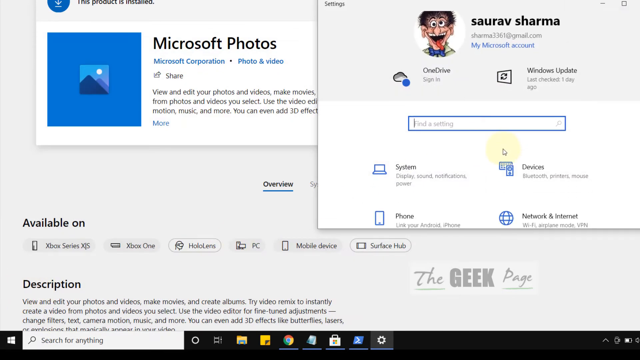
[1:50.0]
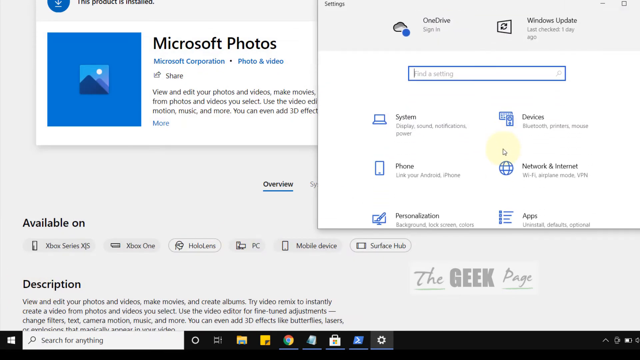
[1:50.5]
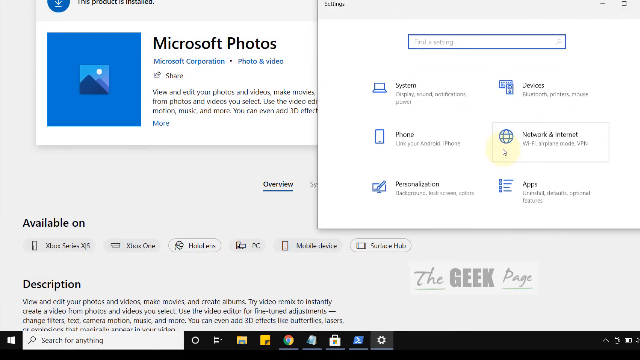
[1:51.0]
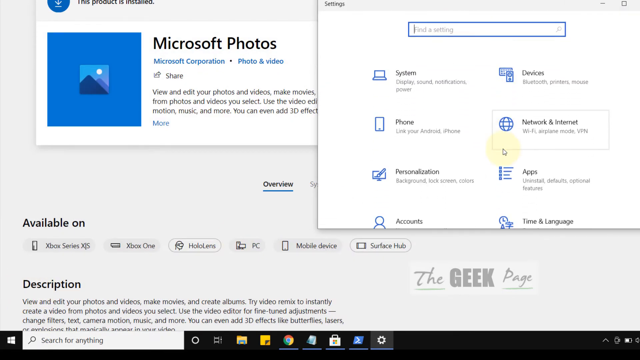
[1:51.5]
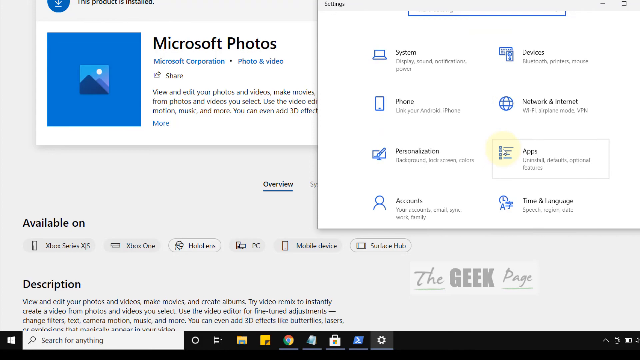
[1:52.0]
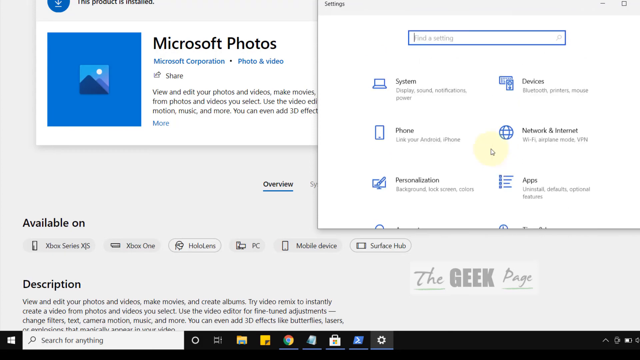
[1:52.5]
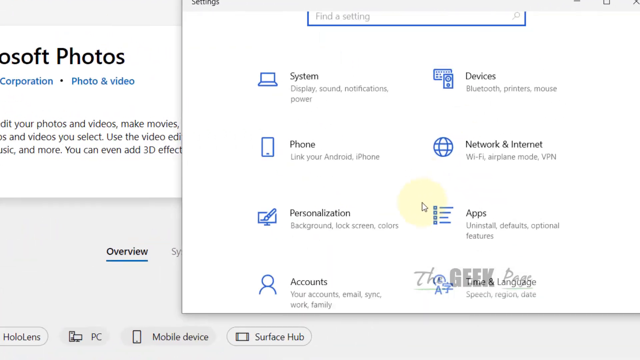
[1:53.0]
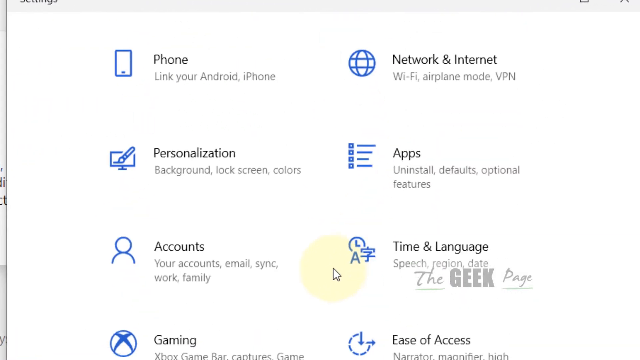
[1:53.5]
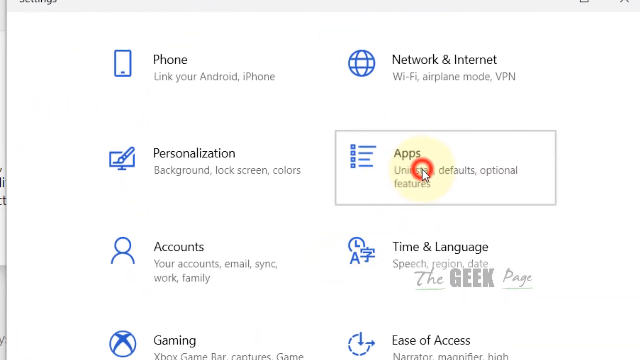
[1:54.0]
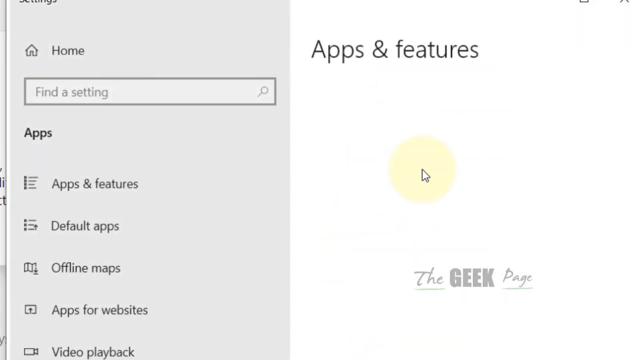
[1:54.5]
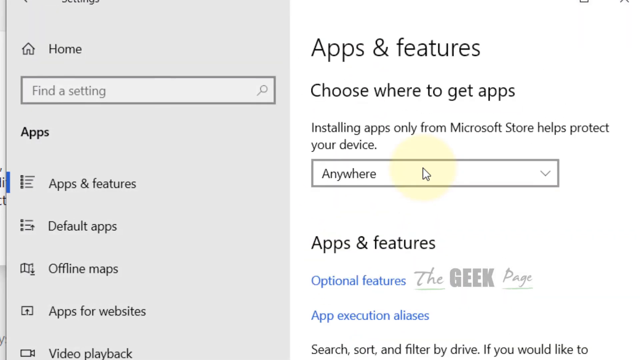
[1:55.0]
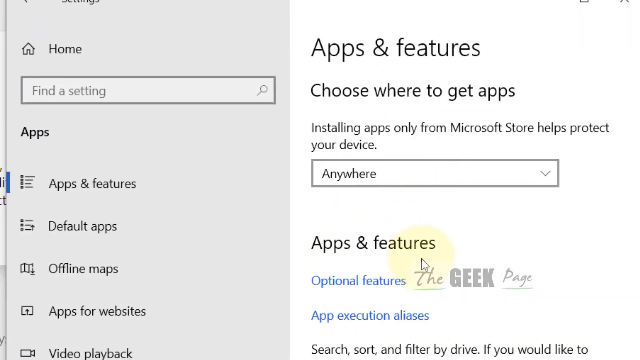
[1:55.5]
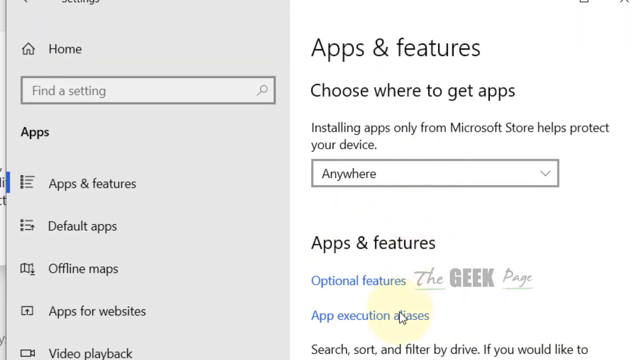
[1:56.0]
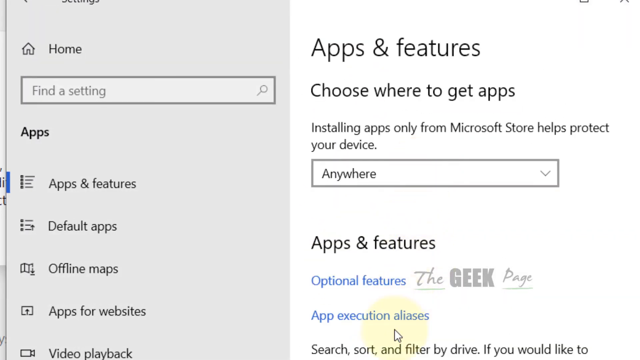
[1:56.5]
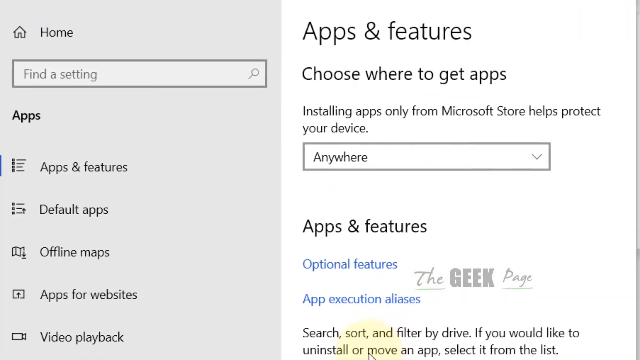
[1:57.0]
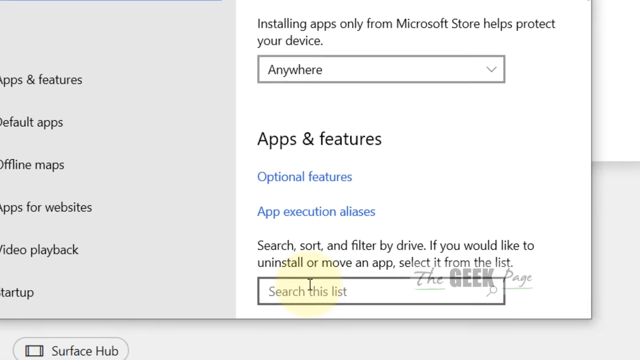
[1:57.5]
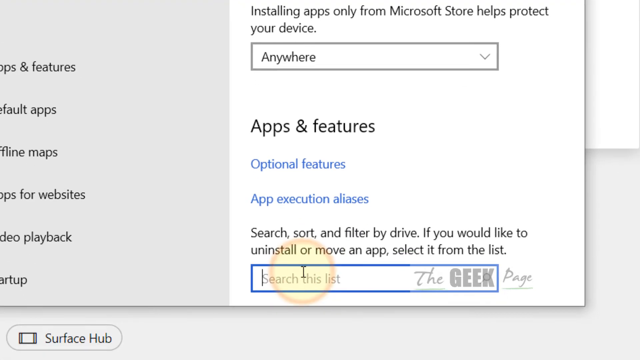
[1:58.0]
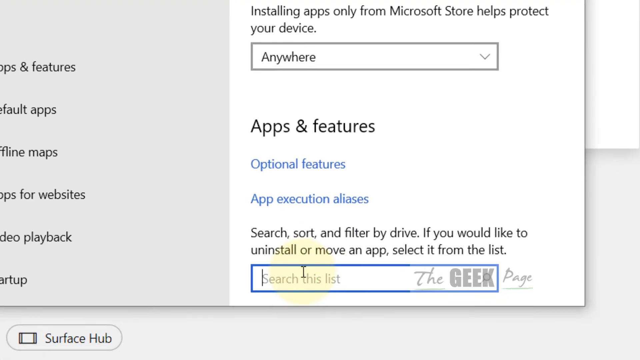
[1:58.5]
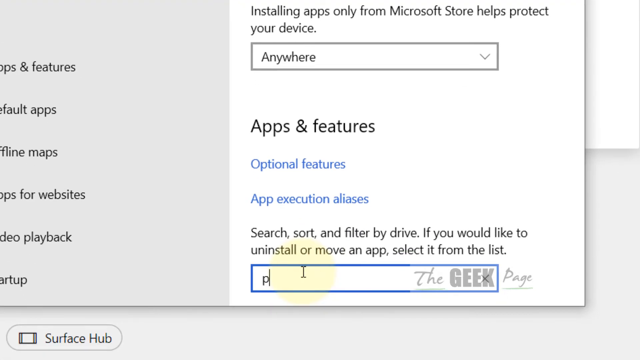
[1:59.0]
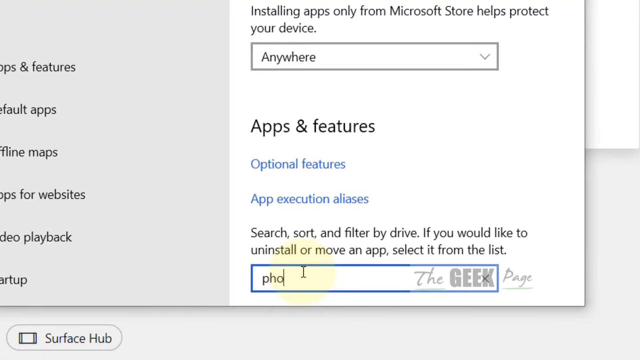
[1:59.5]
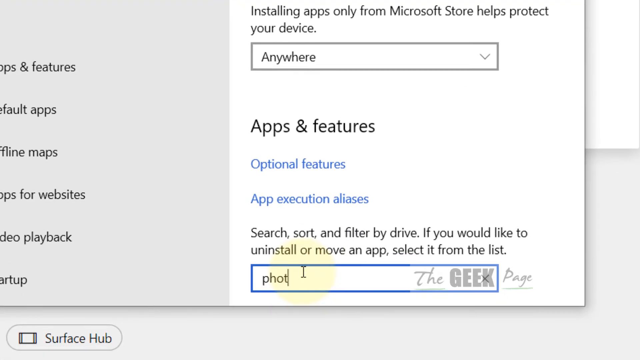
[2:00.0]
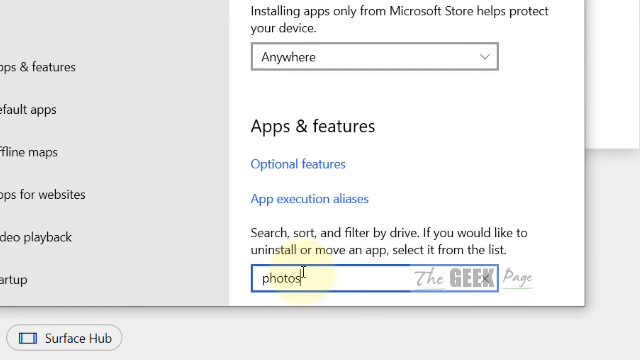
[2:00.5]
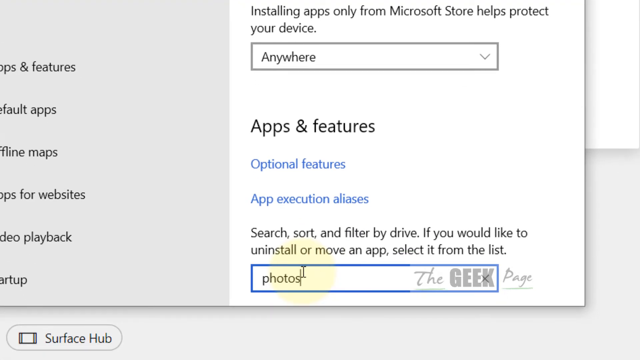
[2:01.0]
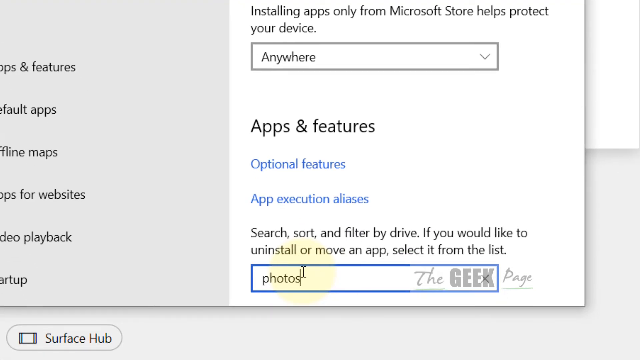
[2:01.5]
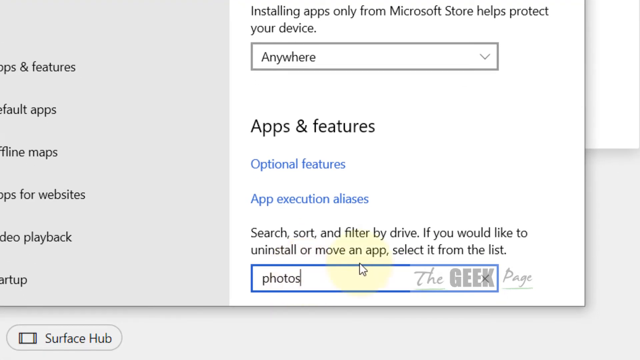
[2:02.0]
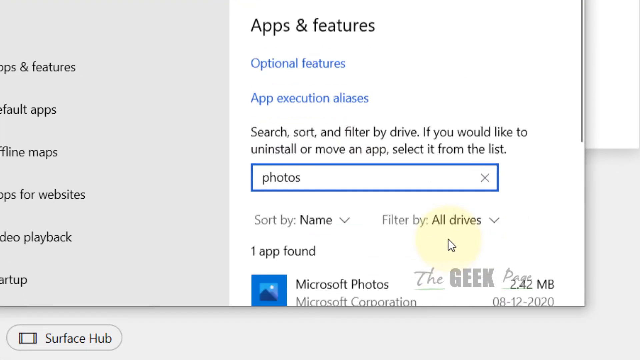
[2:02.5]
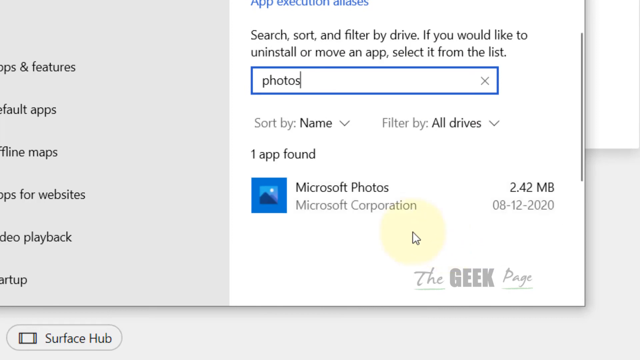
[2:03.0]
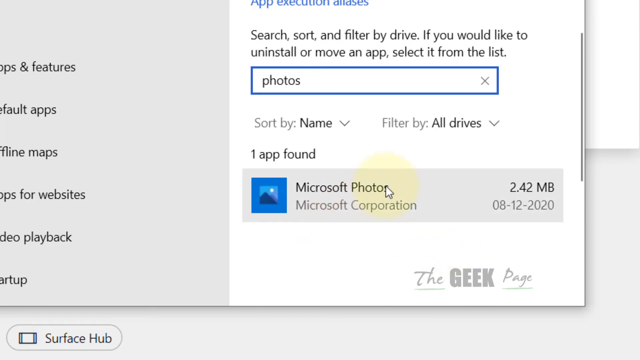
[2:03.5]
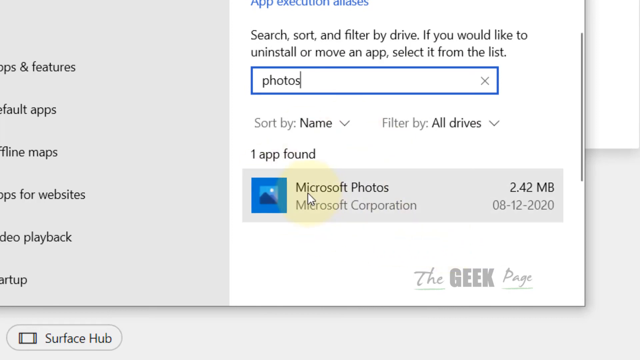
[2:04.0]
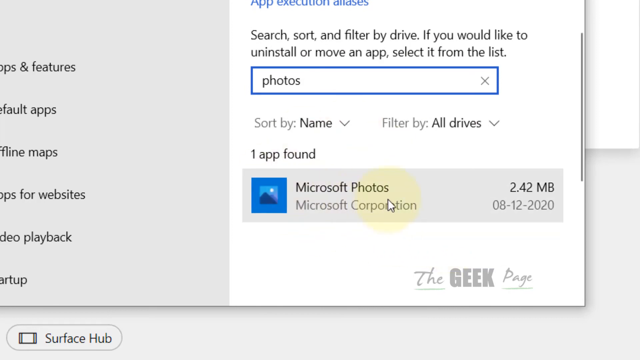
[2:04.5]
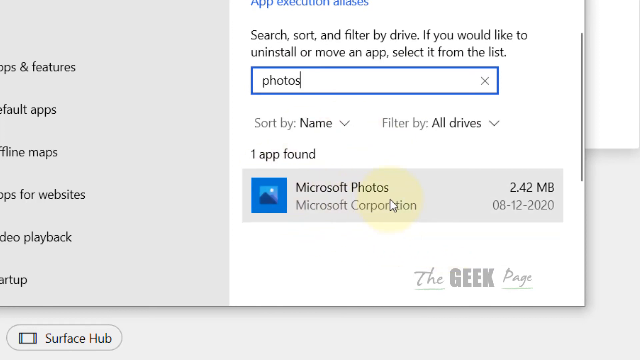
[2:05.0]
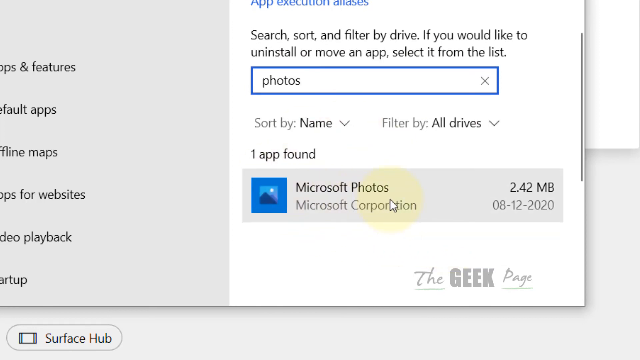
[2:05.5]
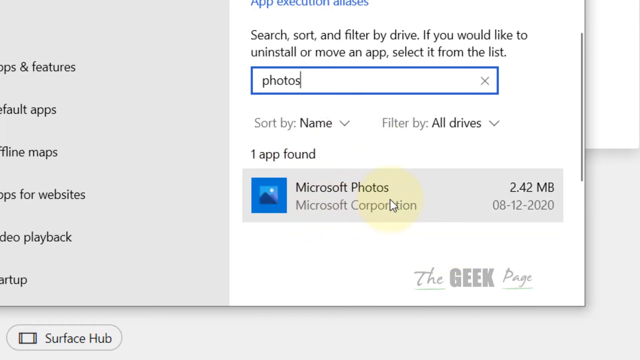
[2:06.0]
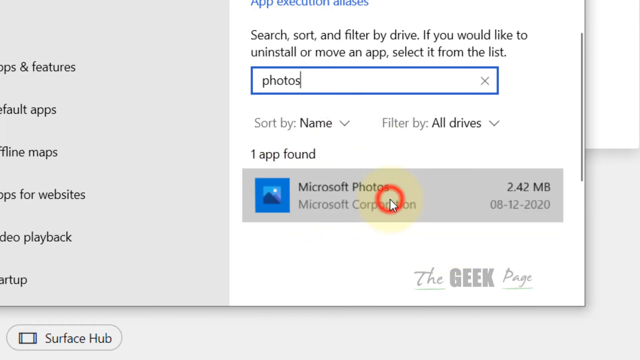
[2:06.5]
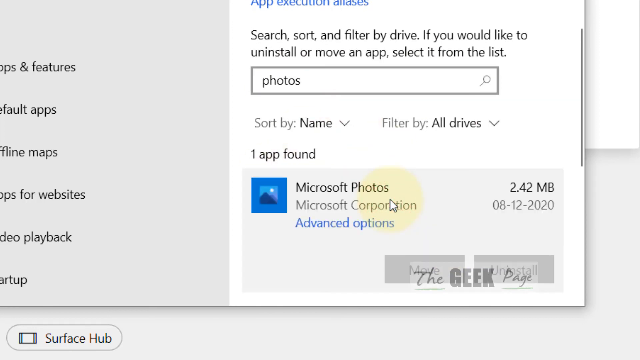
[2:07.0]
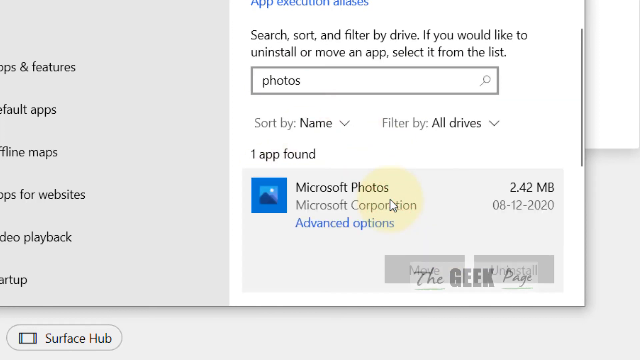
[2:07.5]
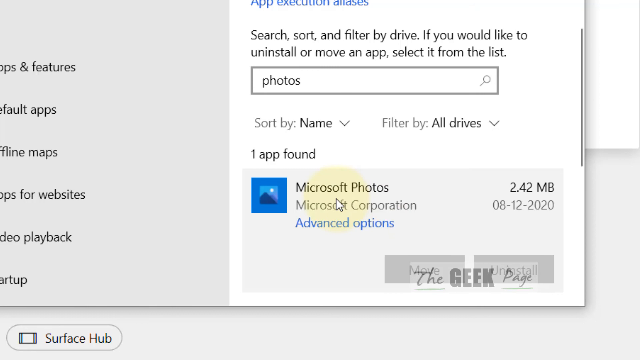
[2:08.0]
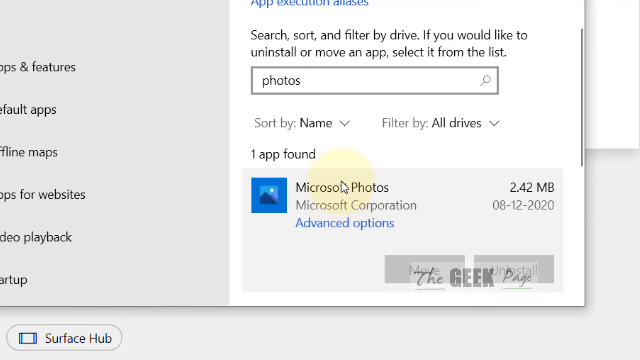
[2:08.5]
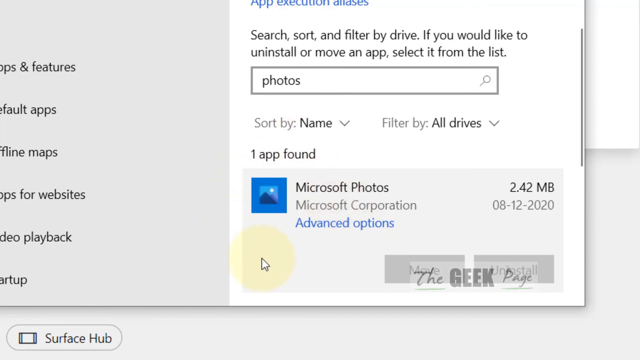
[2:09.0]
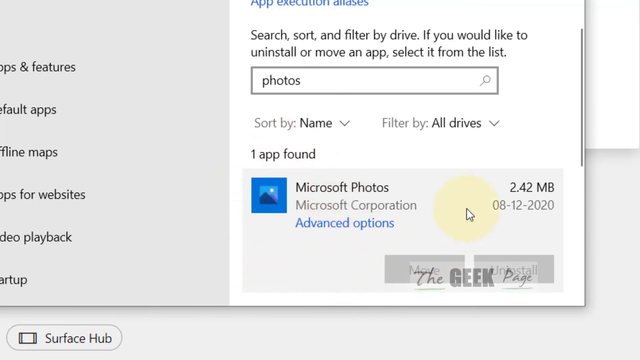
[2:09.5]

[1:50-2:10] On a laptop or computer monitor, someone has clicked an option that pops up in the upper right corner, showing an illustrated face of a man with his tongue hanging out and rather googly-looking eyes. In the upper right corner it reads the name "Saurav Sharma", "Sharma3361@gmail.com" and "my Microsoft account" in blue text. Beneath that is a OneDrive sign-in button, and to its right a Windows update item that reads "last checked one day ago". Below is an open search box, clicked by the mouse, that says "find a setting". Below that are options with icons: "system" in the upper left; to its right "devices", which reads "Bluetooth, printers and mouse"; "phone" in the lower left with a phone icon; and in the lower right "network and internet", which reads "Wi-Fi, airplane mode and VPN".